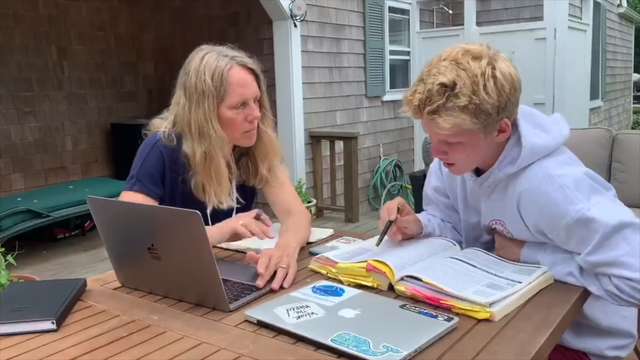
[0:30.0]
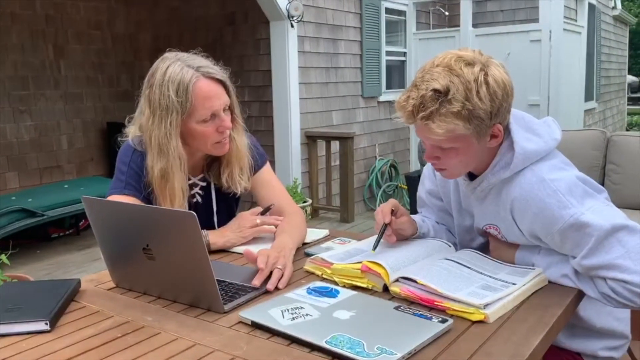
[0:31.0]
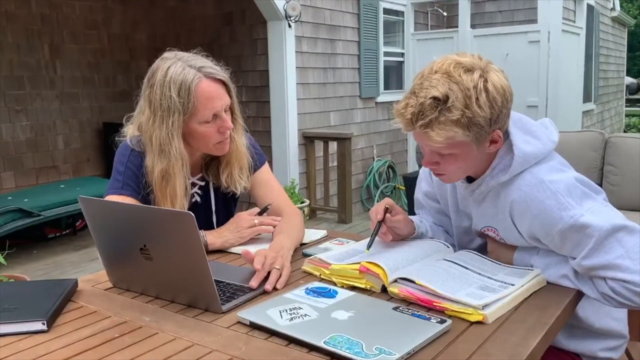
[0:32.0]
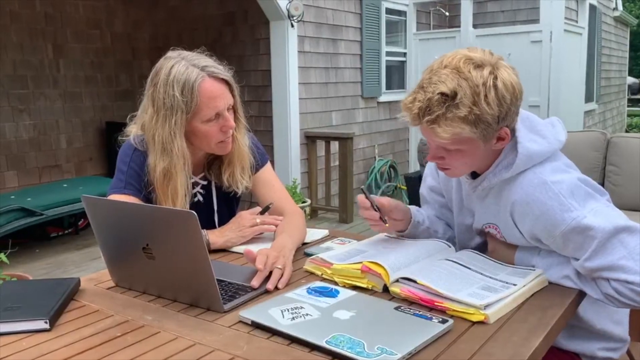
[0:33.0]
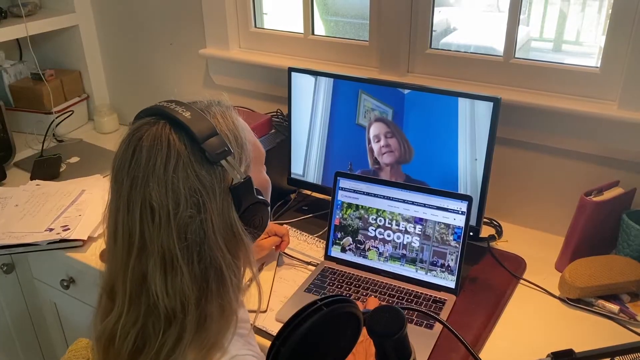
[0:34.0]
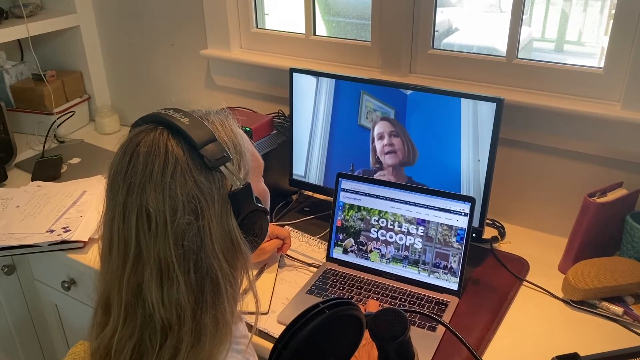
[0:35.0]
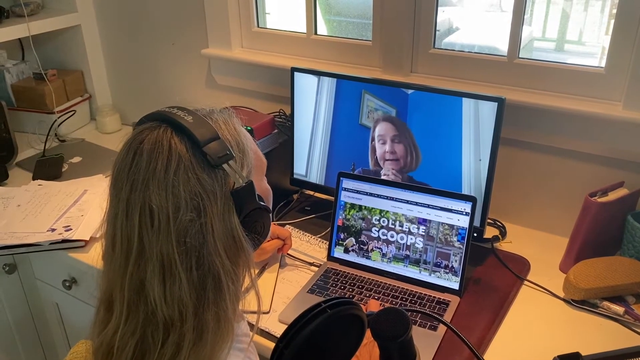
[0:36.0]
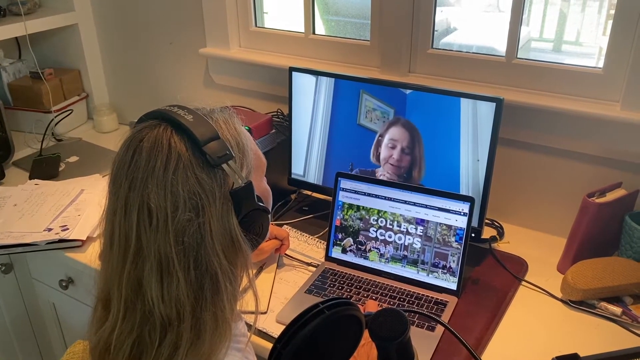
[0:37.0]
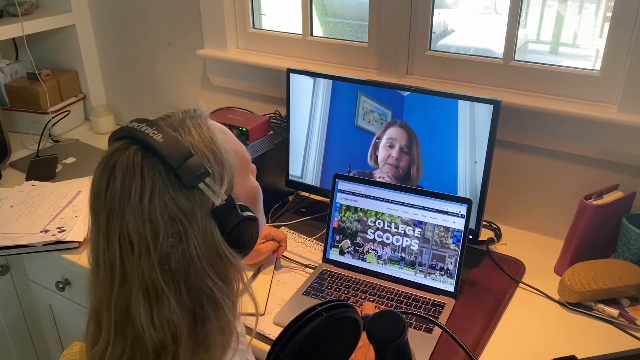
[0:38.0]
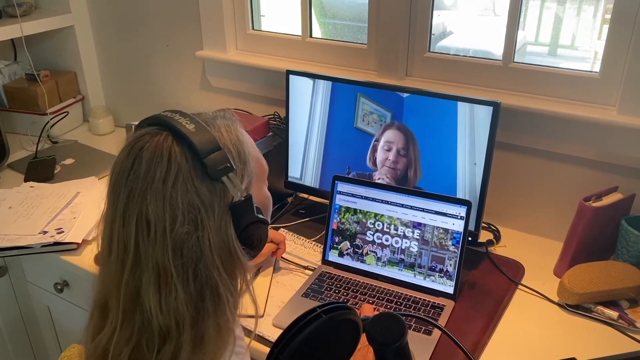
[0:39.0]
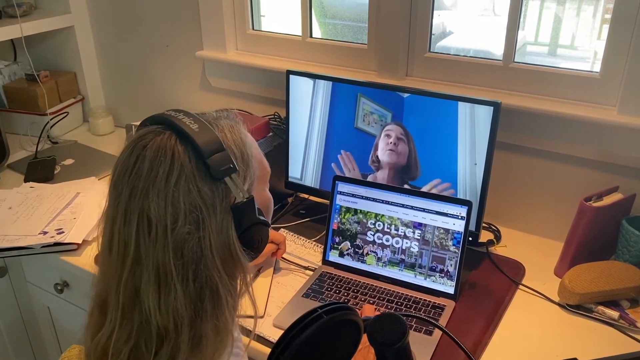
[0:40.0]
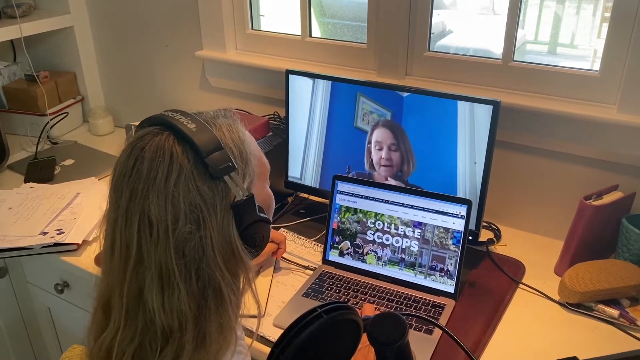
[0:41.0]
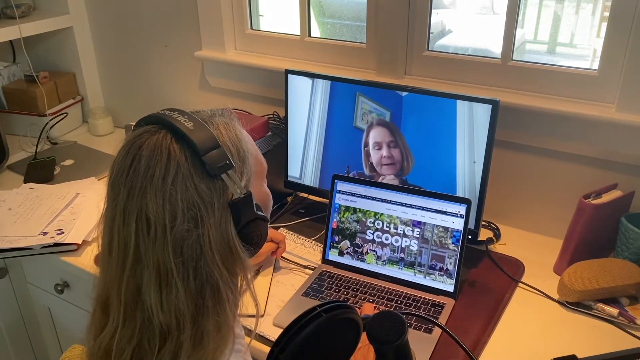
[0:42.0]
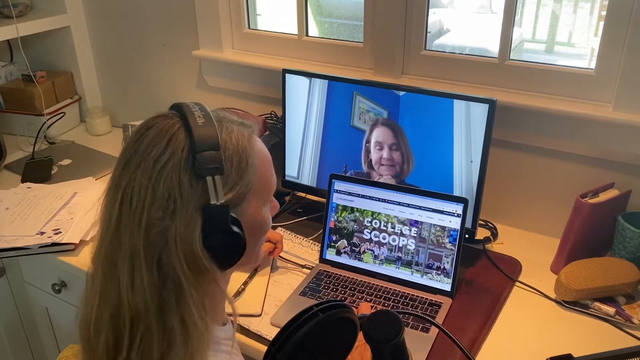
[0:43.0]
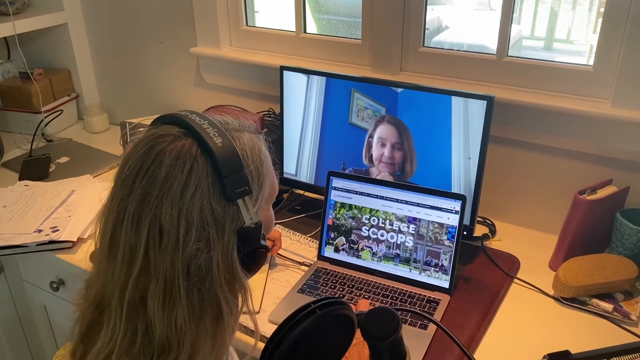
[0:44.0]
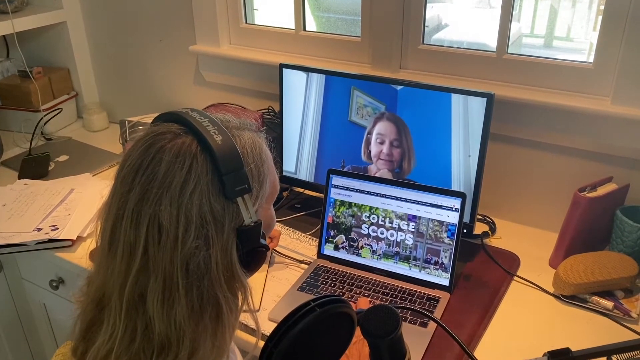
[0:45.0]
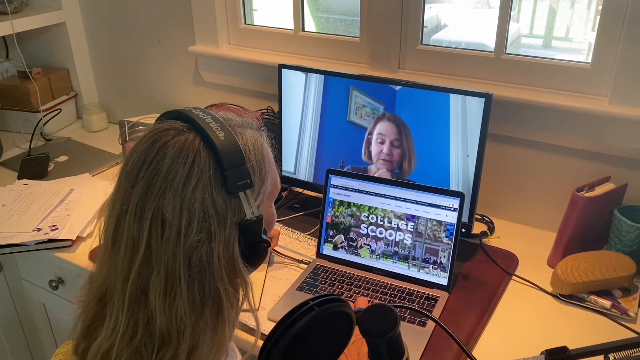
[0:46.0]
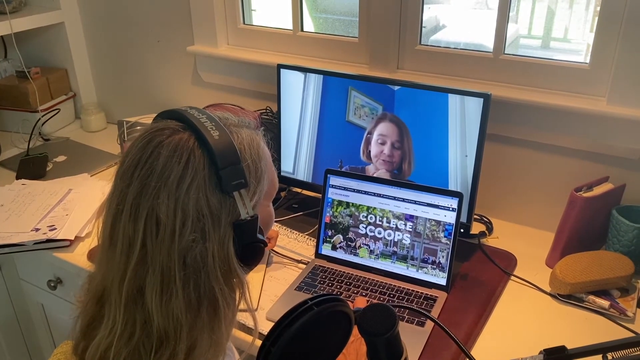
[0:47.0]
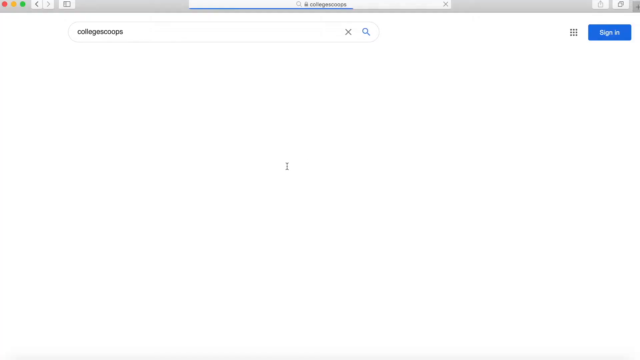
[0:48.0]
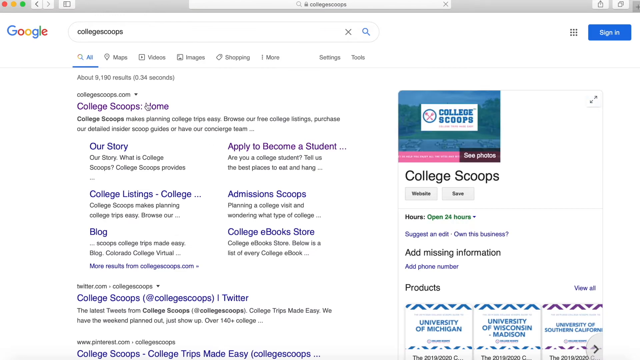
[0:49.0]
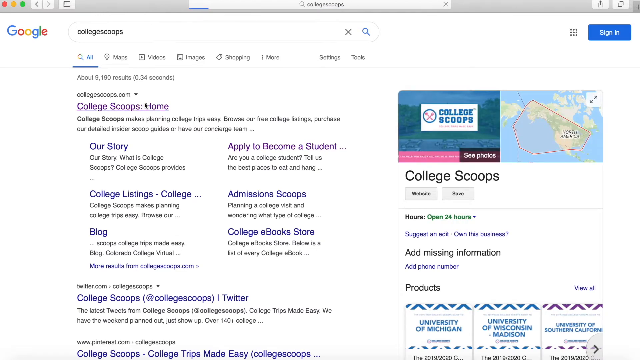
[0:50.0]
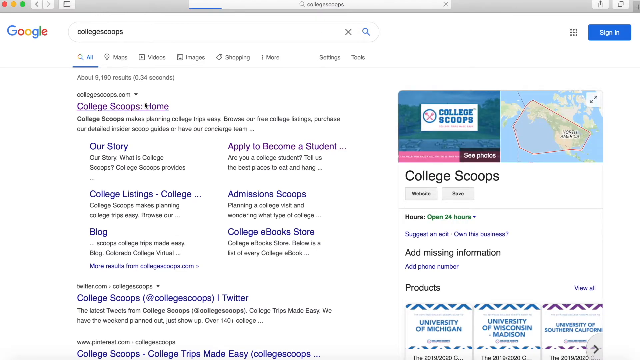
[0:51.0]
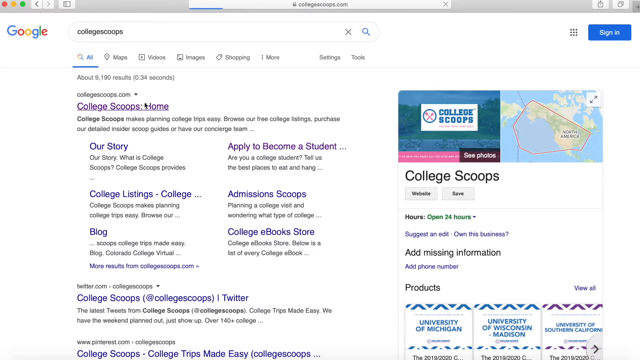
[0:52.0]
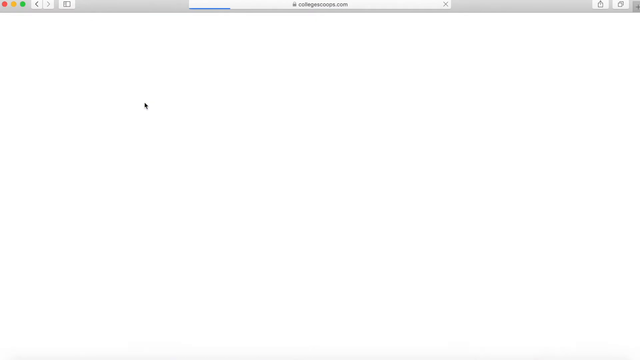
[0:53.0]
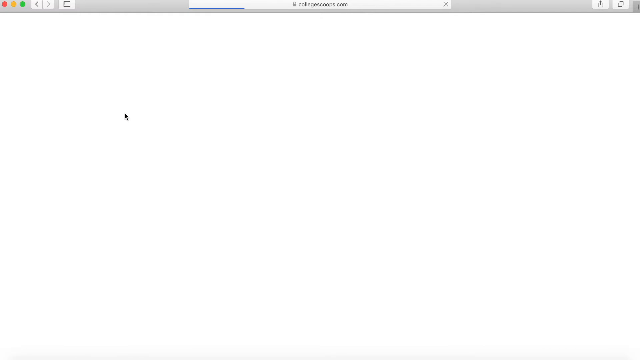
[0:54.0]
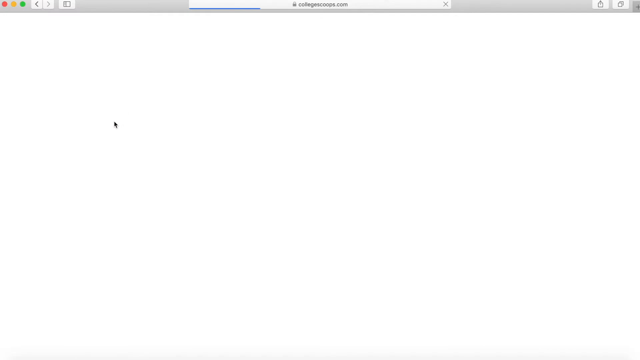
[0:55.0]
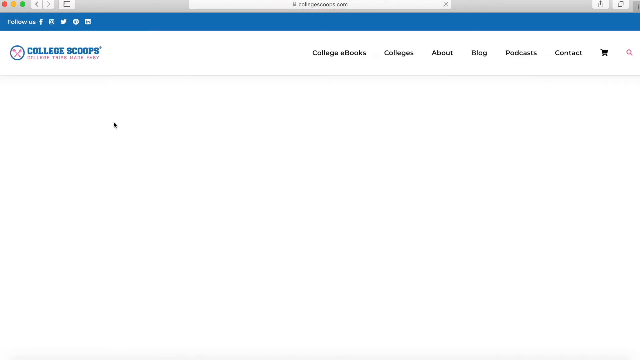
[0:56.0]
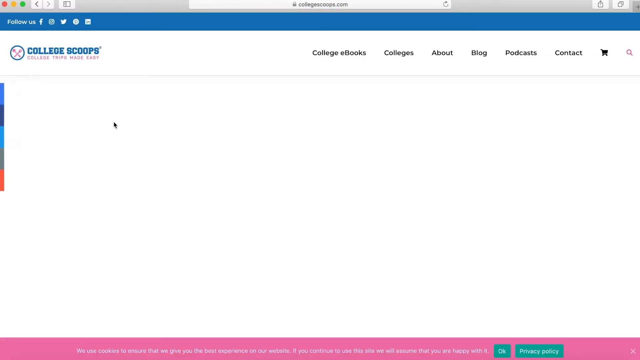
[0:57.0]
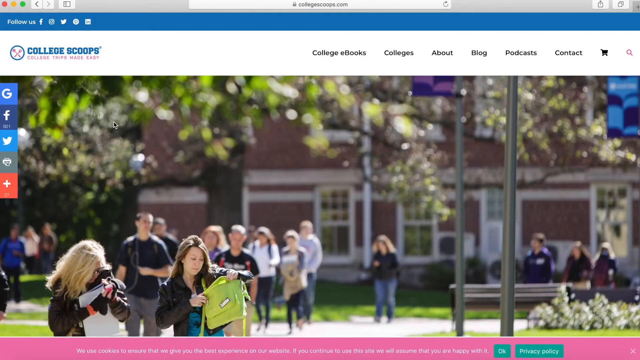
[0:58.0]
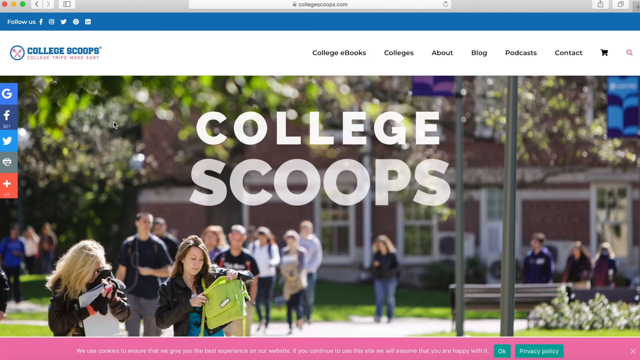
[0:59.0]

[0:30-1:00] The same guy continues studying with the woman. He has bright blonde hair that is curly, flowy and short, while she has dirty blonde hair that is frizzy and not well brushed. The laptop they are using appears to be an Apple laptop, with the Apple logo visible on the front. The video then shows a different scene, apparently with the same woman, now having a conversation with someone on a computer. Another laptop in front of the computer she is talking on shows a College Scoops screen. Next the video goes to Google, cutting to what looks like a Windows screen recording: College Scoops is typed in and the homepage is clicked.